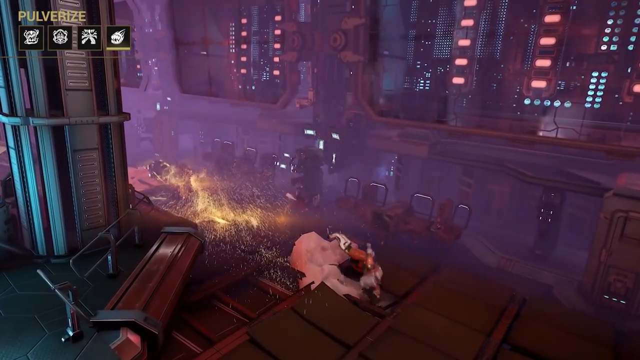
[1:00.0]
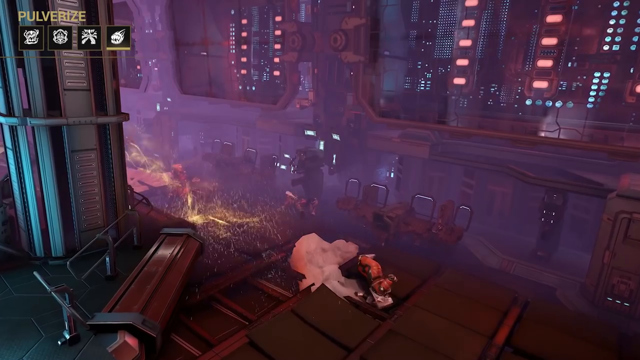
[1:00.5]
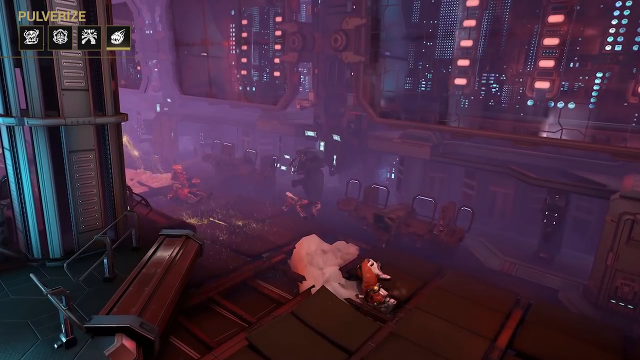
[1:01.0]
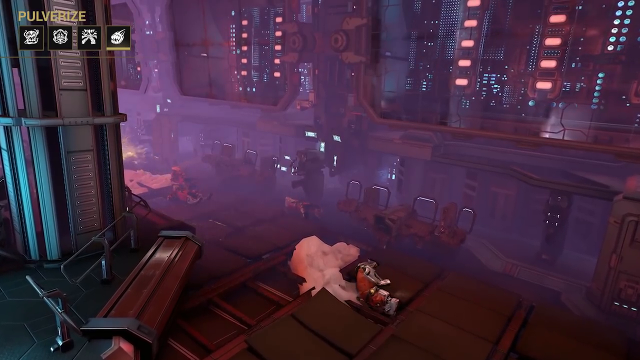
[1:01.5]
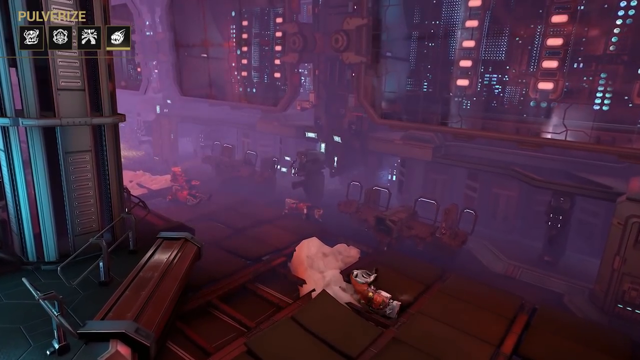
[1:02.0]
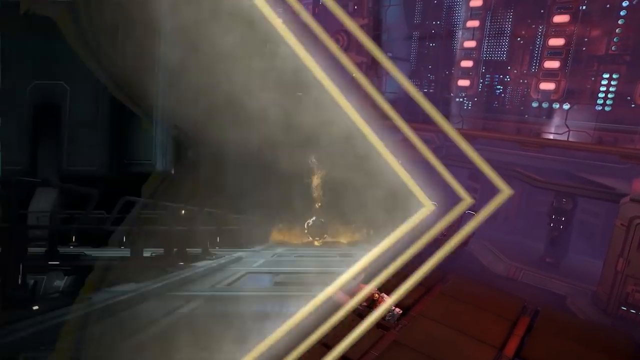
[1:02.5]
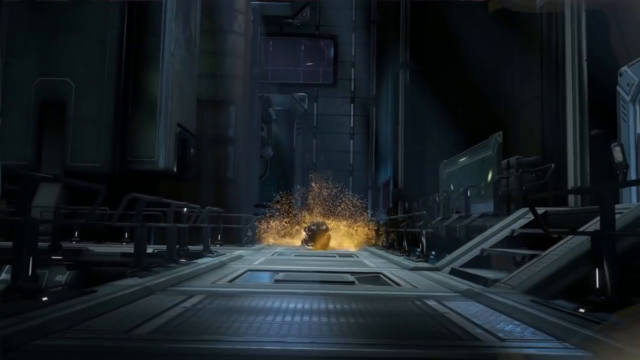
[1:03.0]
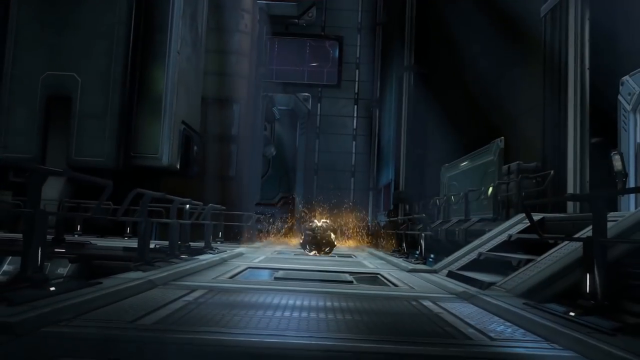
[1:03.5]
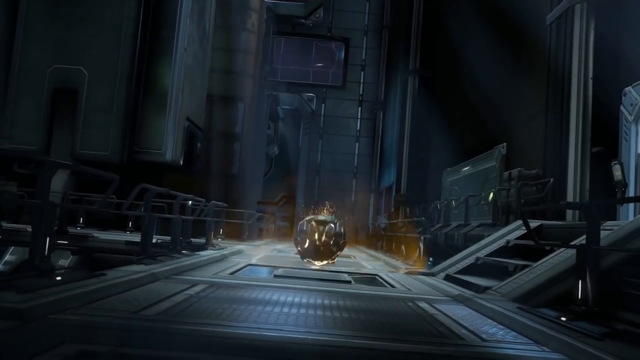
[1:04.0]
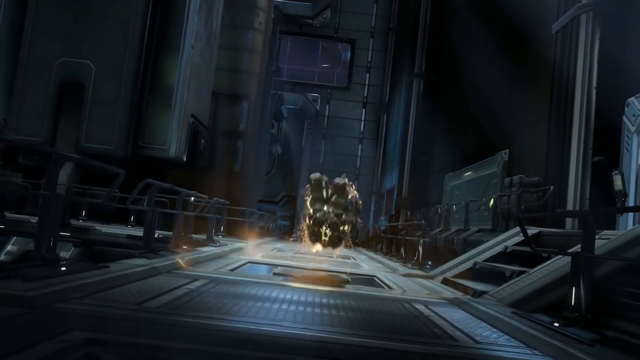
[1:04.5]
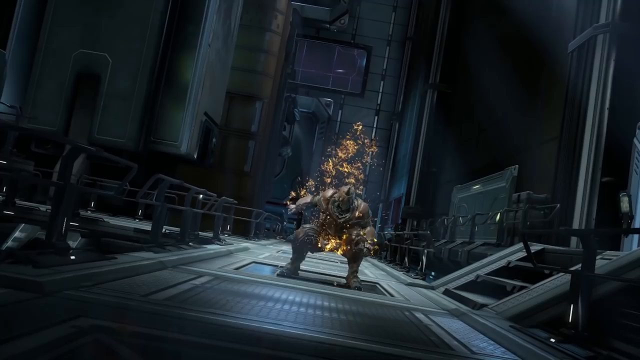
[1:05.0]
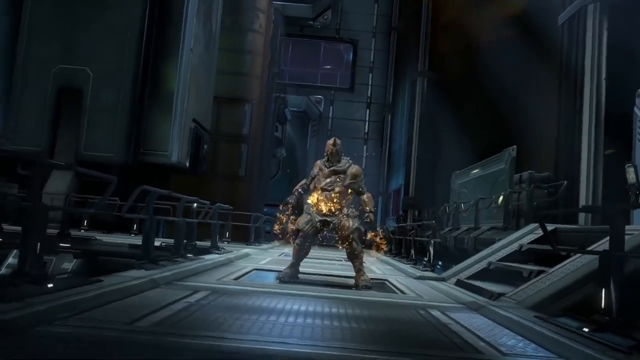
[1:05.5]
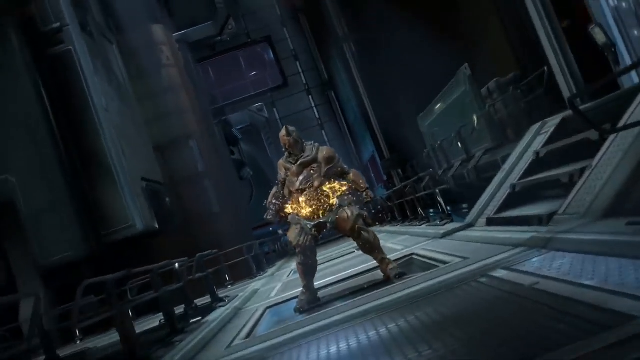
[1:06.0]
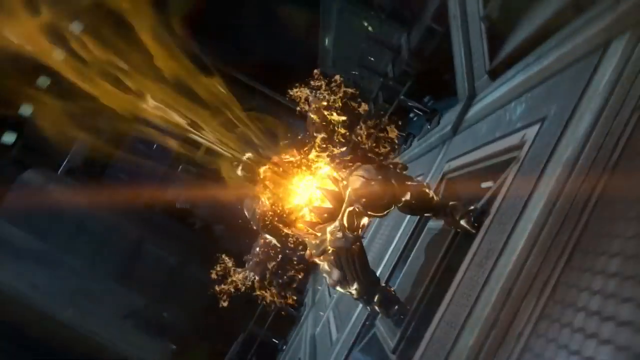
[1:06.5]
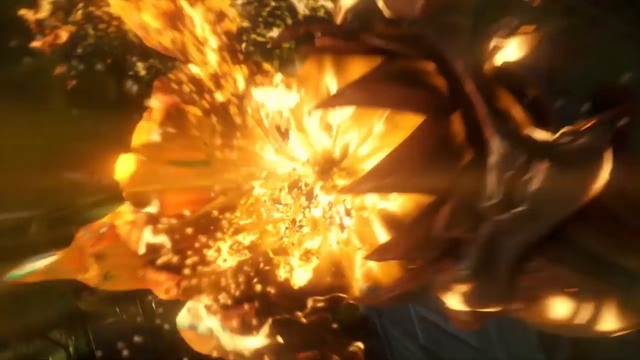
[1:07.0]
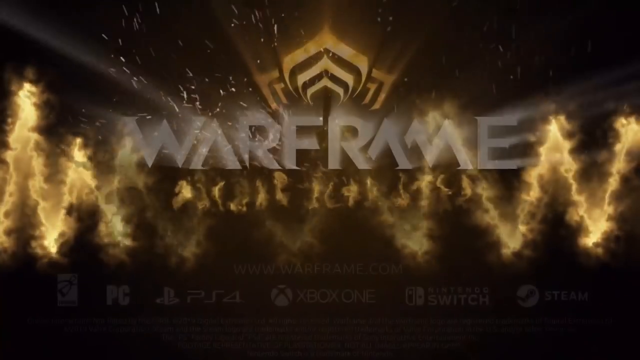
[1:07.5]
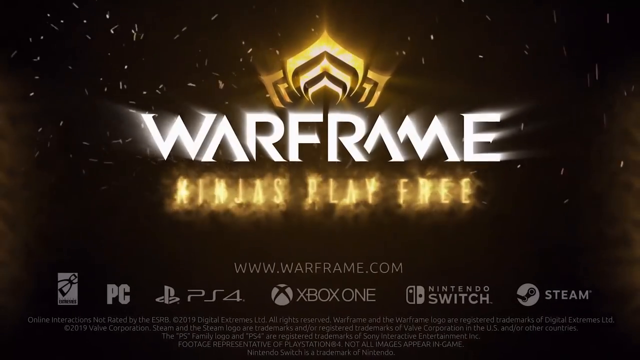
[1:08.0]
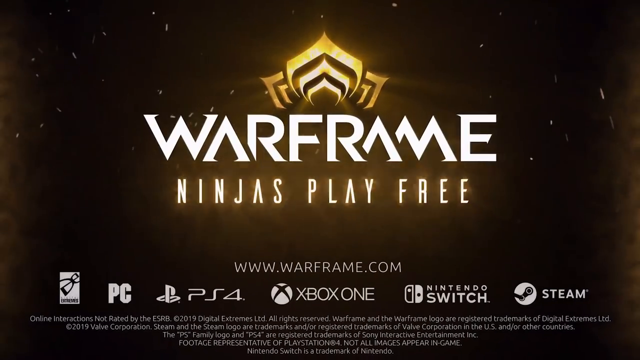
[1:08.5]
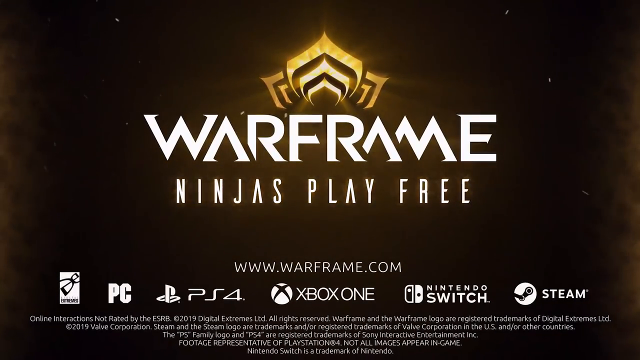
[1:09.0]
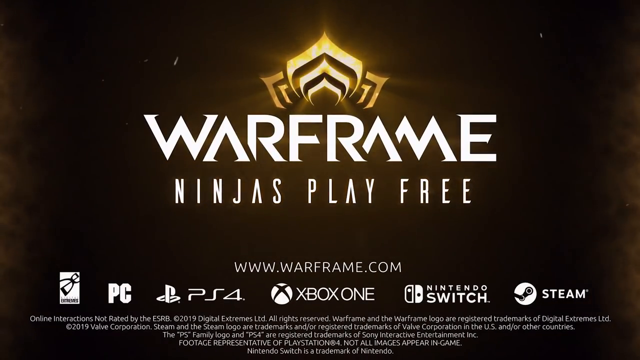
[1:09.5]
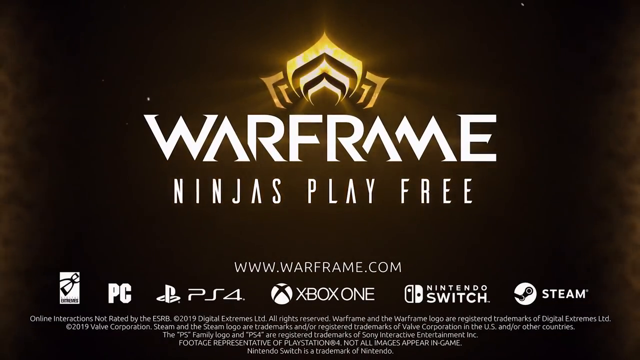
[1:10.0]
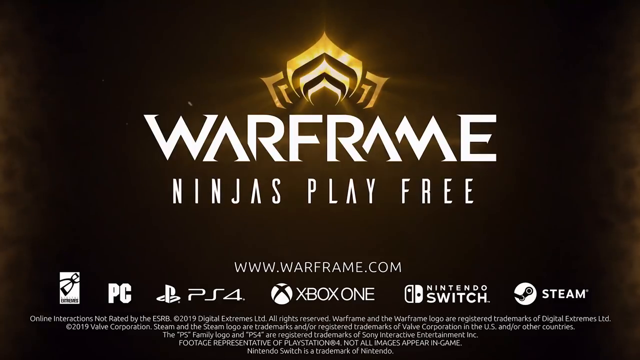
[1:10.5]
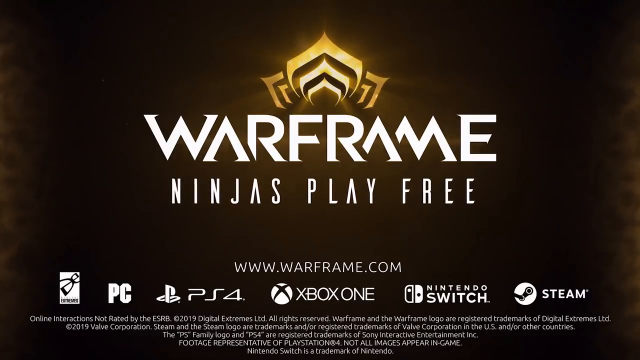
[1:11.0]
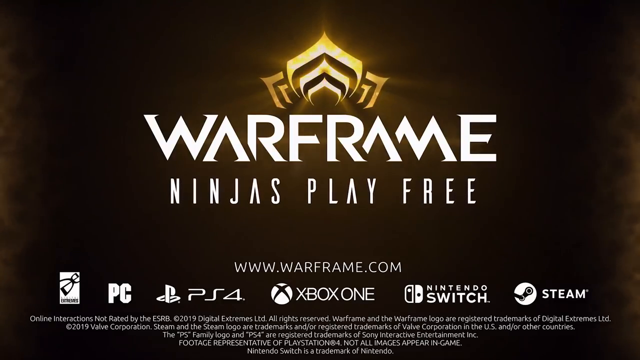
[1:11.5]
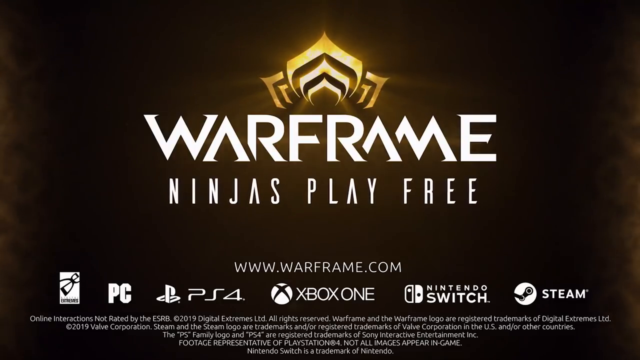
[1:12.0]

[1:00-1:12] The top left corner reads "pulverize," with four icons, the last one clicked. A guy who has turned into a ball of fire knocks a bunch of people down. A golden diagonal chevron on its side crosses the screen from left to right, and then the game returns. A ball with fire is rolling again, and the guy comes out of it almost like a gymnast and stands up with his waist on fire. He leans back and spews fire out of his belly, fire still coming out of him. There seems to be a close-up of his belly or something jagged, almost like a jaw closing. Then "Warframe" appears in white, with "ninjas play free" underneath.